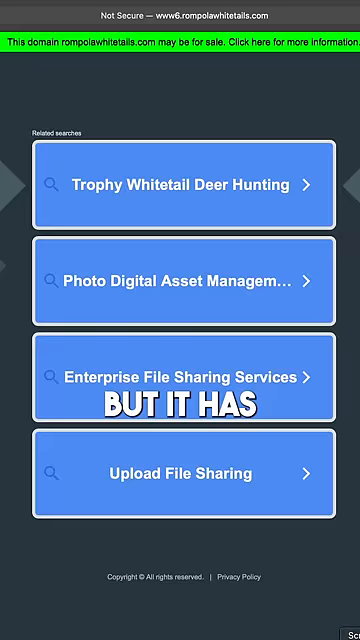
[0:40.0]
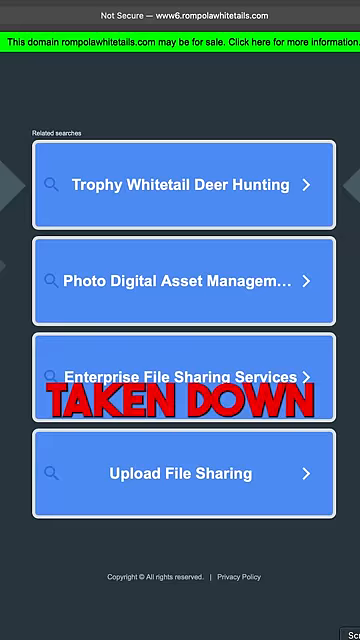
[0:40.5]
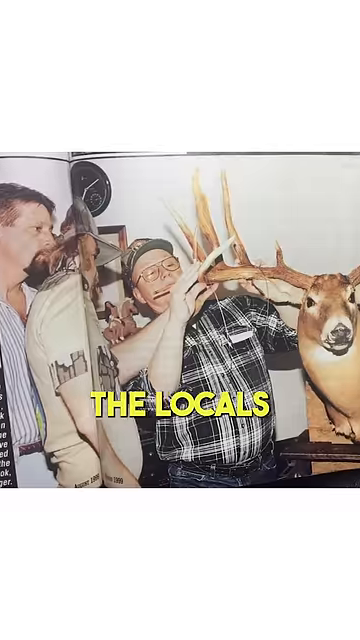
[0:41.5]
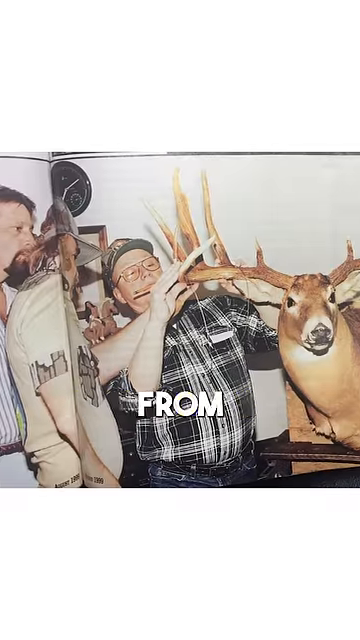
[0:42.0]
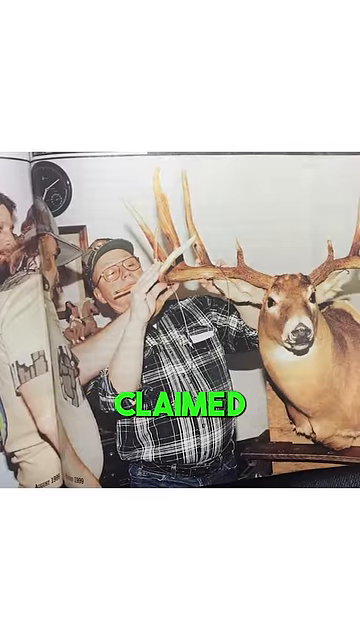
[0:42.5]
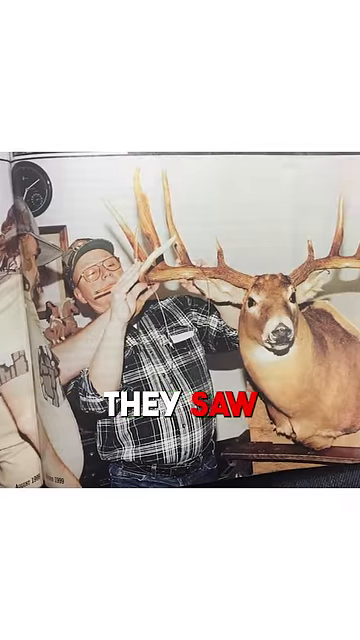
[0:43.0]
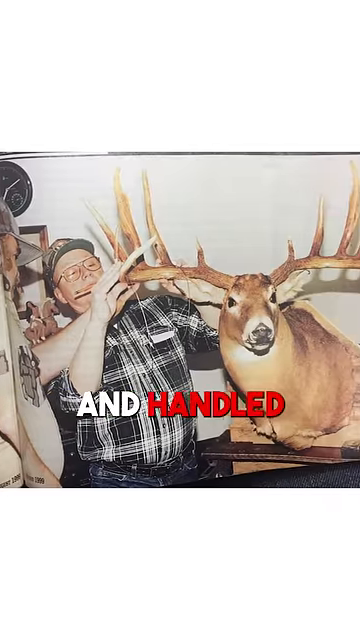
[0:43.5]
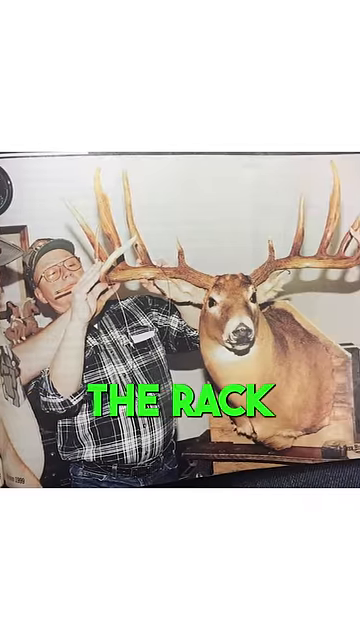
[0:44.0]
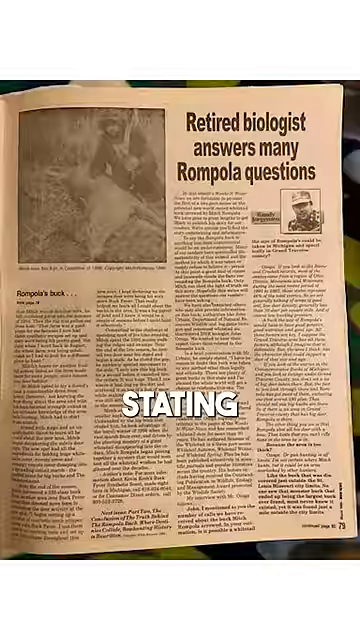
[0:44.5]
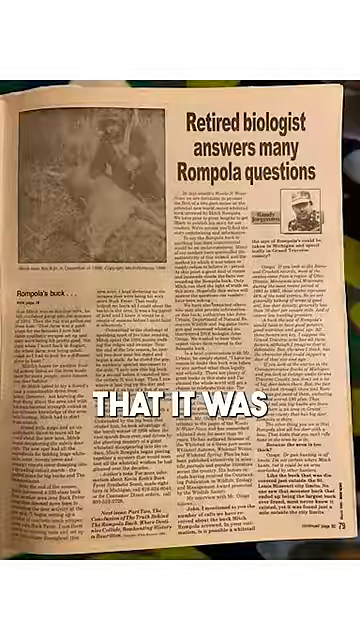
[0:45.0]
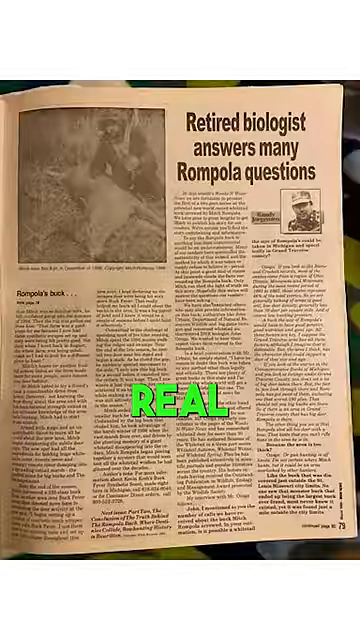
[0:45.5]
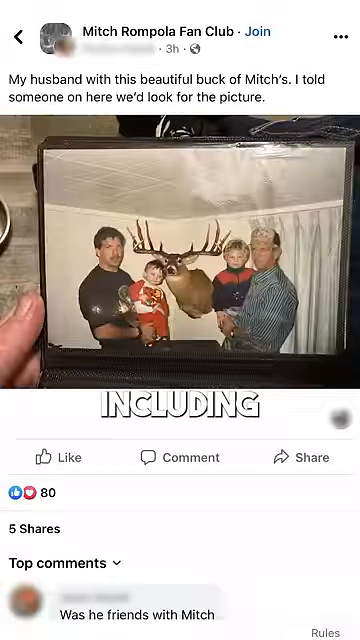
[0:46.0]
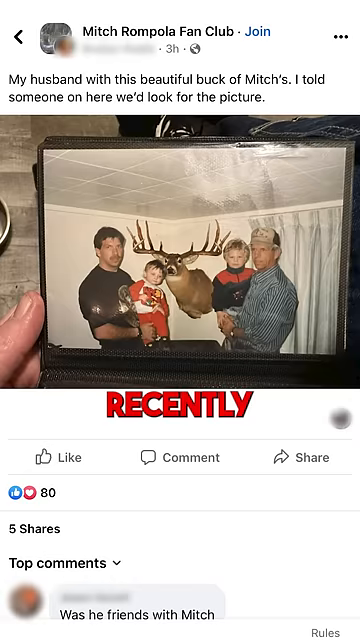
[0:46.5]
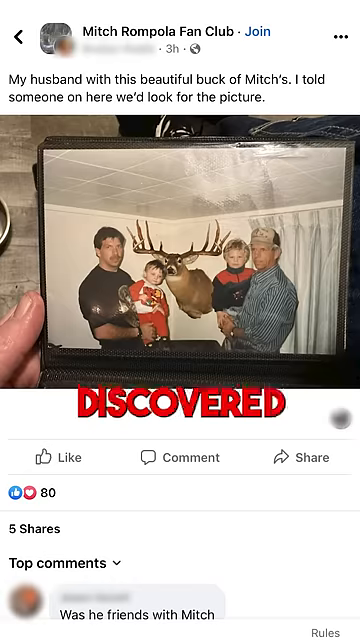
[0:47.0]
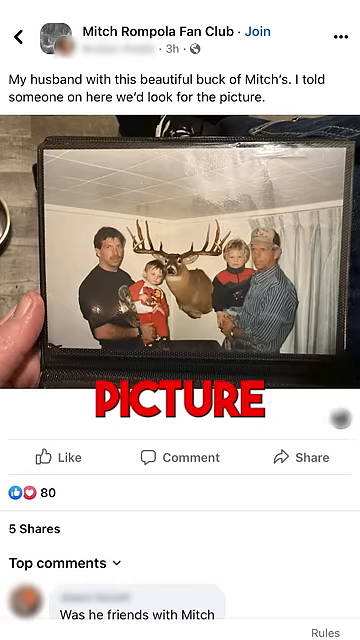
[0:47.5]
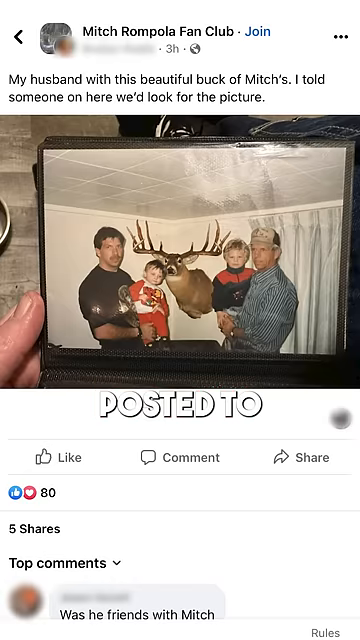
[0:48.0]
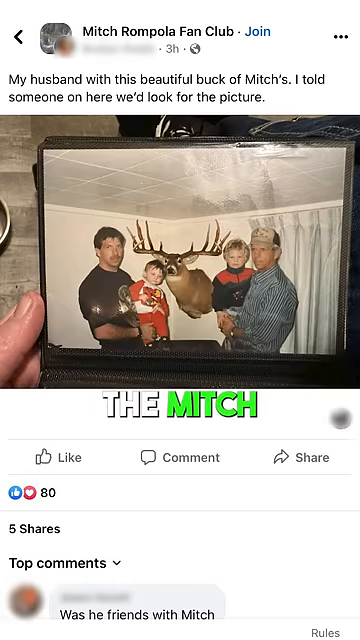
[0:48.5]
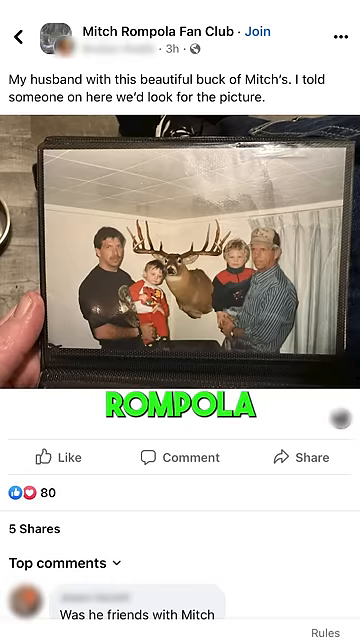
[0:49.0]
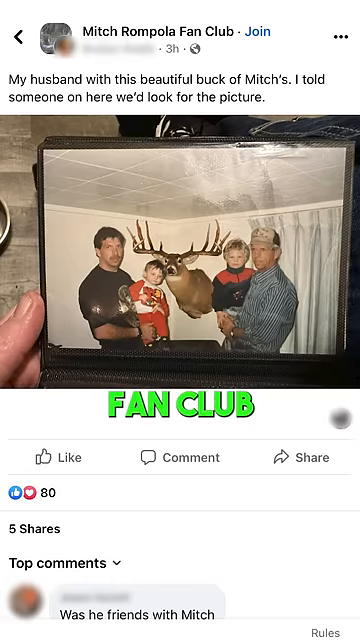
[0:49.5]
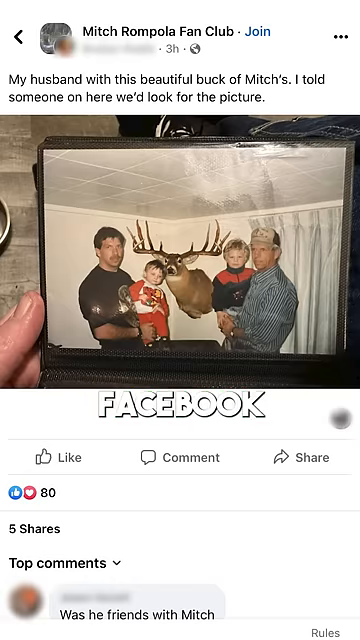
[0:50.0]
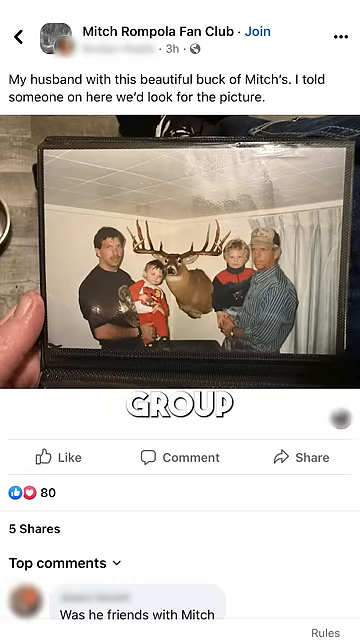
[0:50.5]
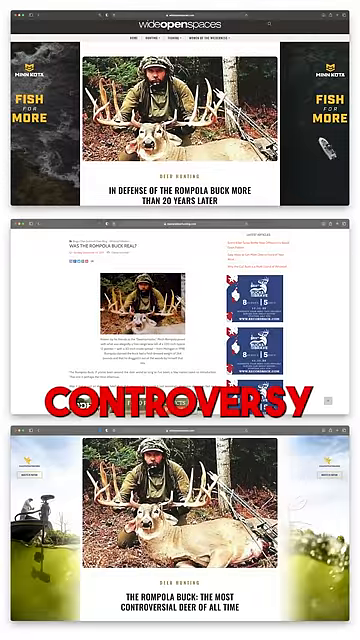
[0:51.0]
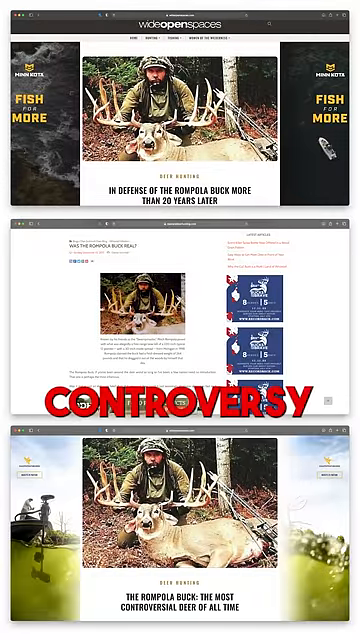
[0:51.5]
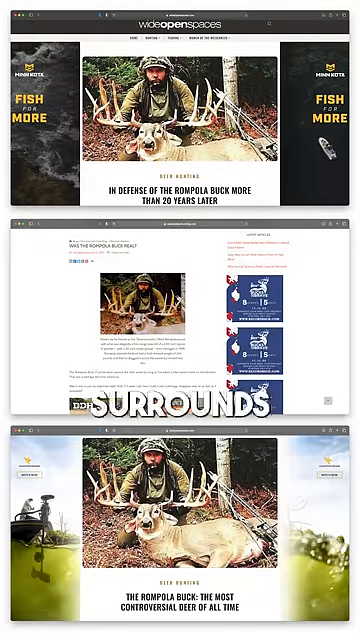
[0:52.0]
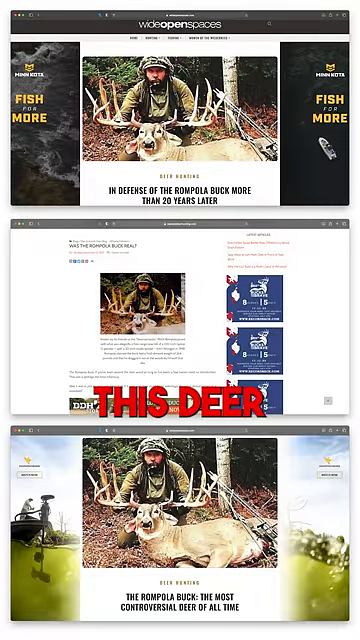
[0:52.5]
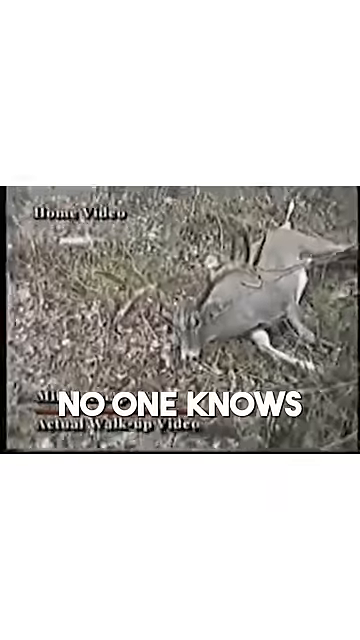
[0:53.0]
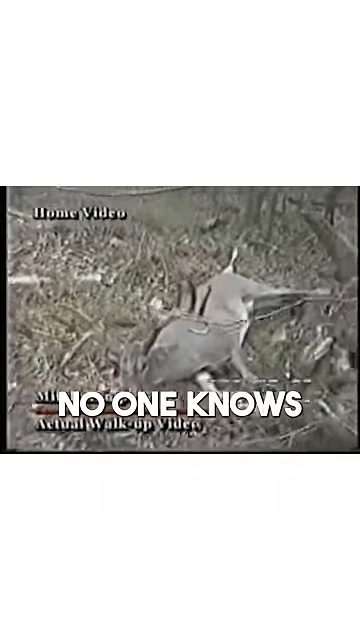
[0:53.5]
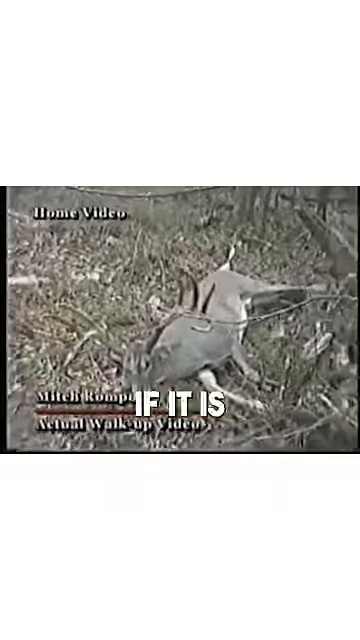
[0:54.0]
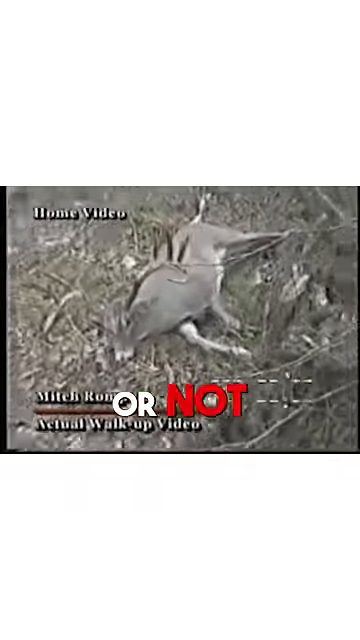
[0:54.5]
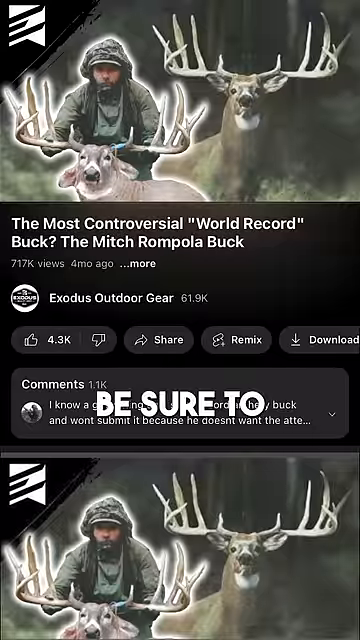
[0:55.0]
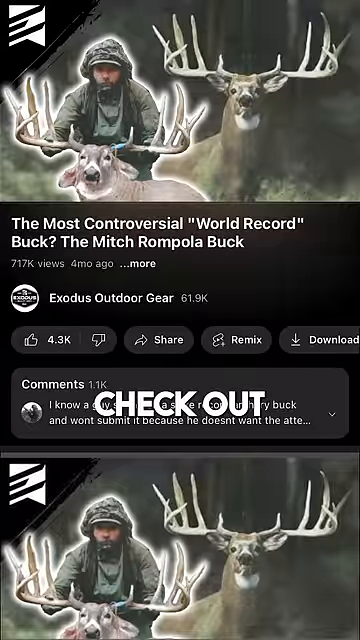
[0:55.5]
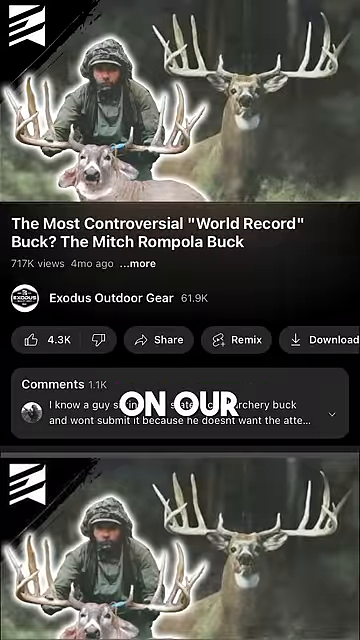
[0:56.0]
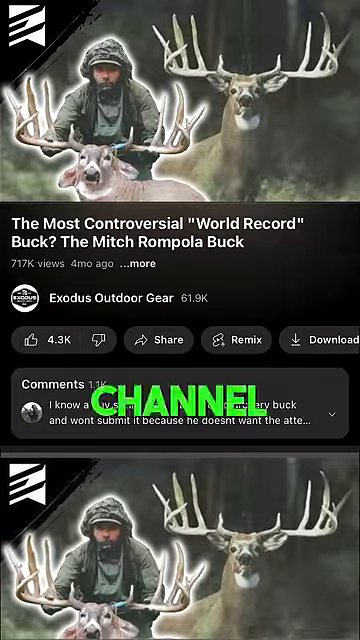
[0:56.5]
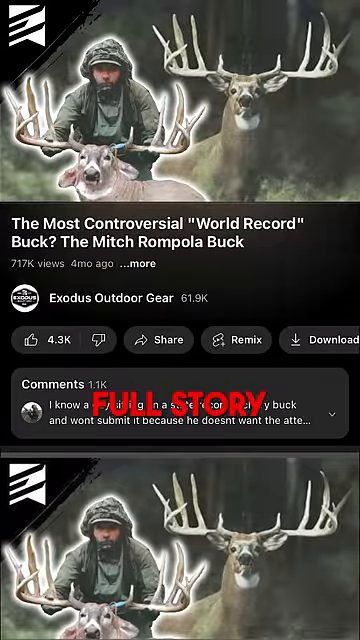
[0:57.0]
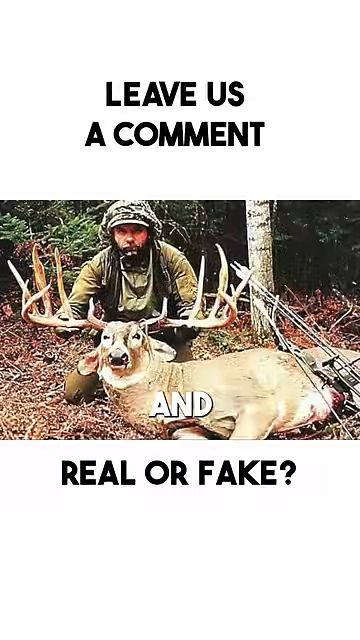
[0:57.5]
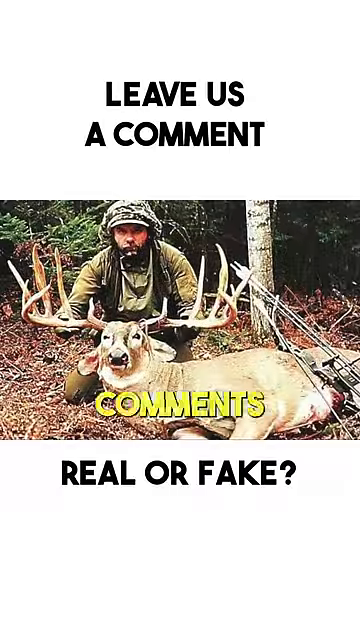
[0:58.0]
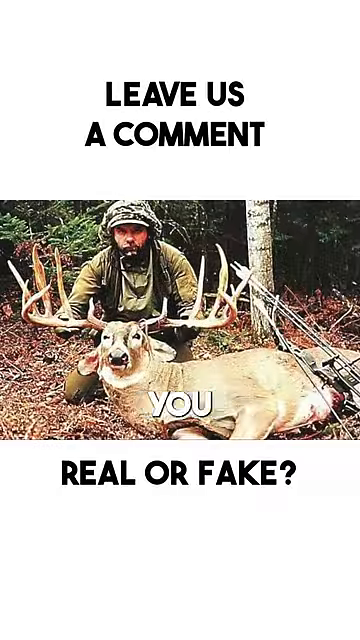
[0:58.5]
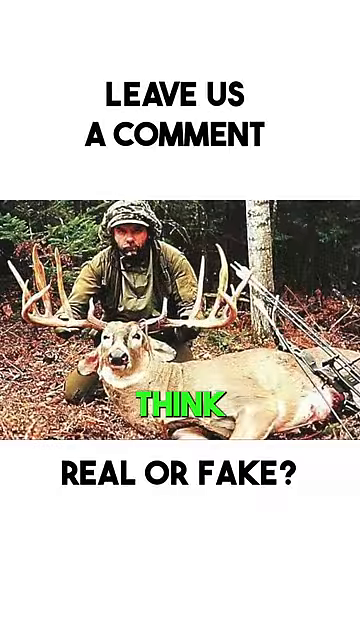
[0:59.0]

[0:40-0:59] The focus is on the man known as Mitch Rampolla and the world-record kill of the deer that gained the name Rampolla's buck. A website features the animal and its head. There were plans to x-ray the animal, which he denied, along with $10,000, and someone helped him sign a contract to take the term world record out of the books.